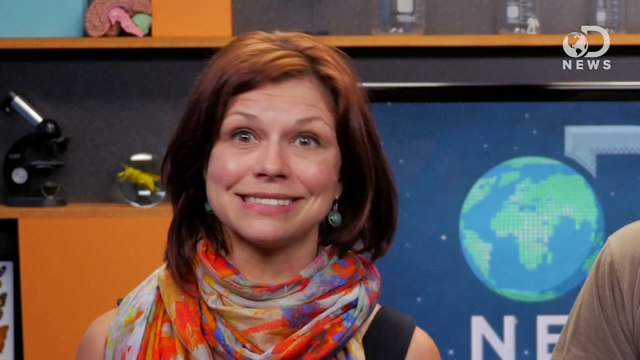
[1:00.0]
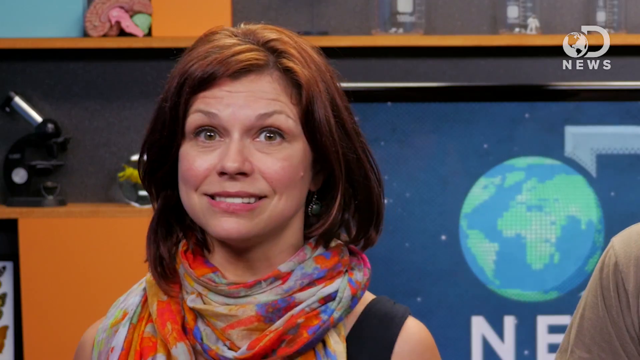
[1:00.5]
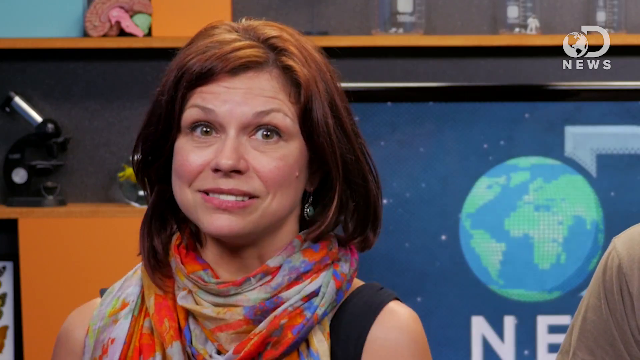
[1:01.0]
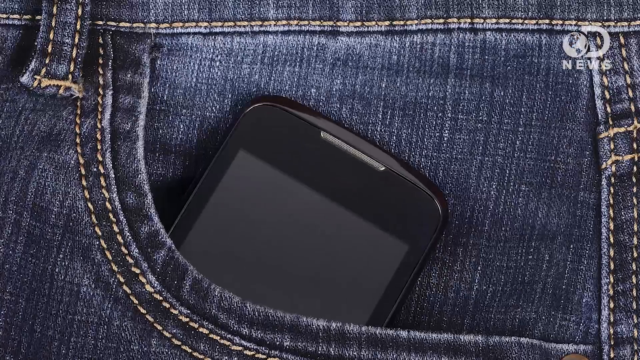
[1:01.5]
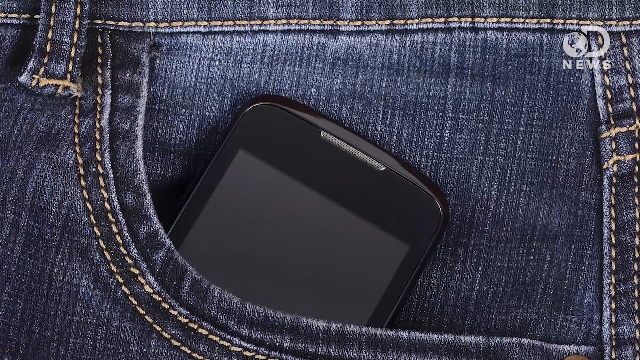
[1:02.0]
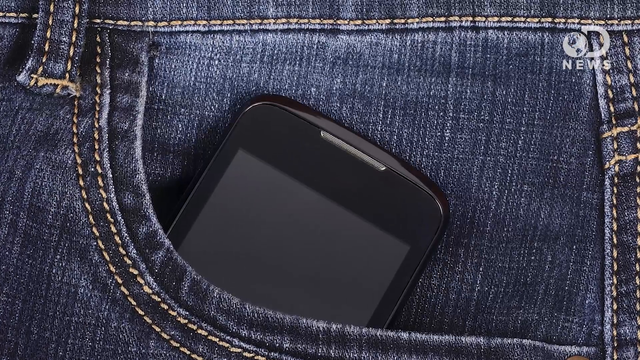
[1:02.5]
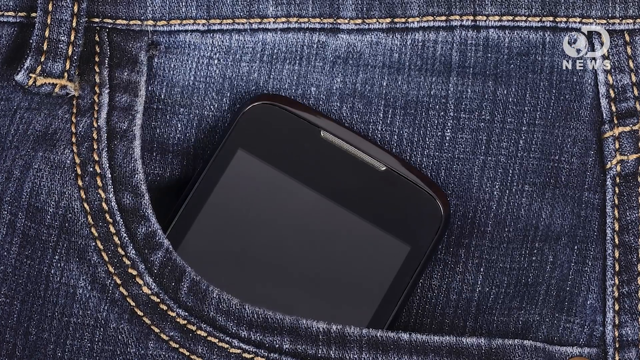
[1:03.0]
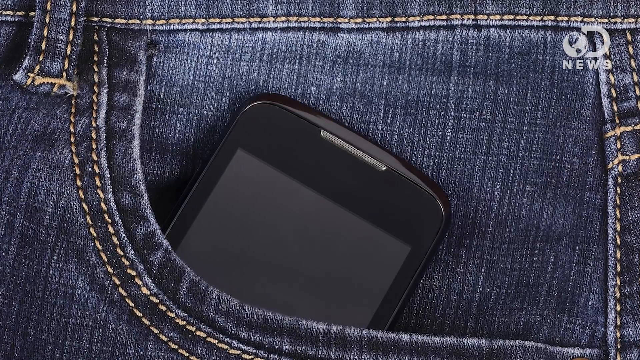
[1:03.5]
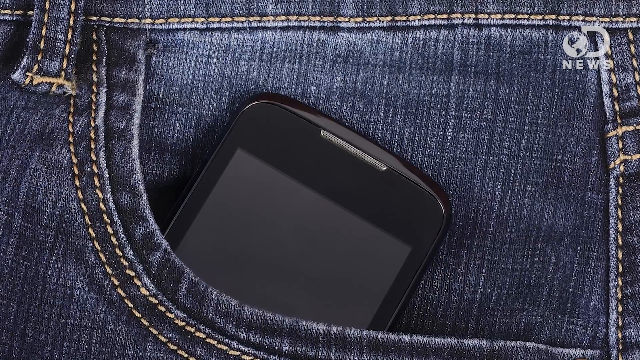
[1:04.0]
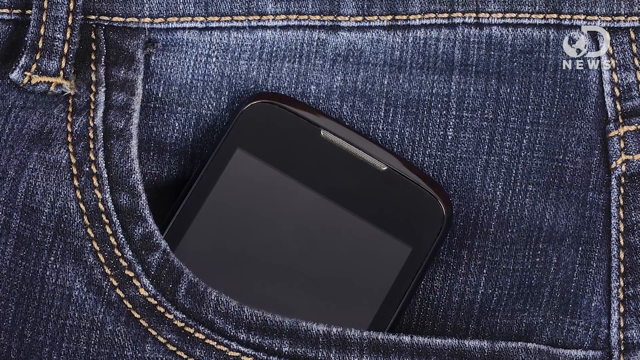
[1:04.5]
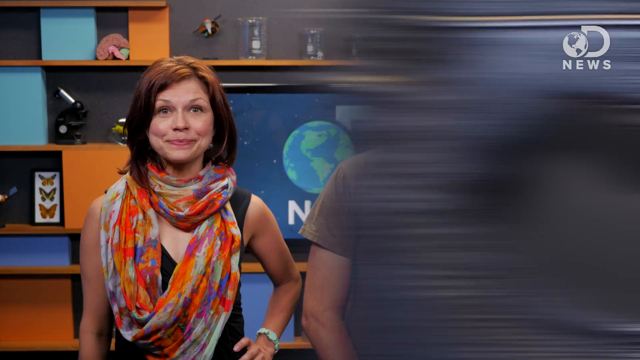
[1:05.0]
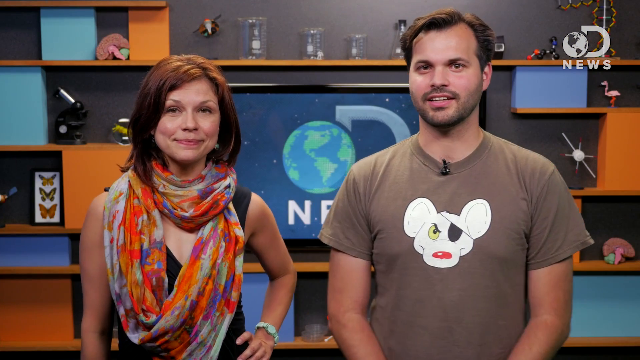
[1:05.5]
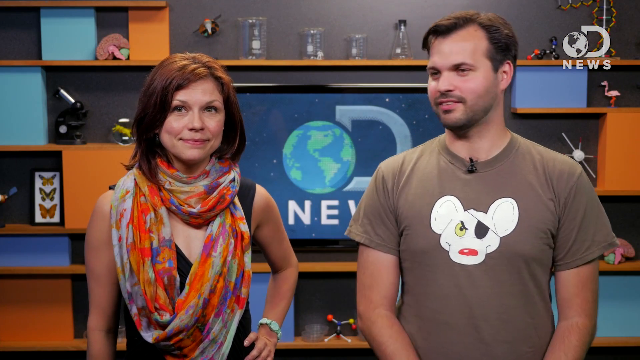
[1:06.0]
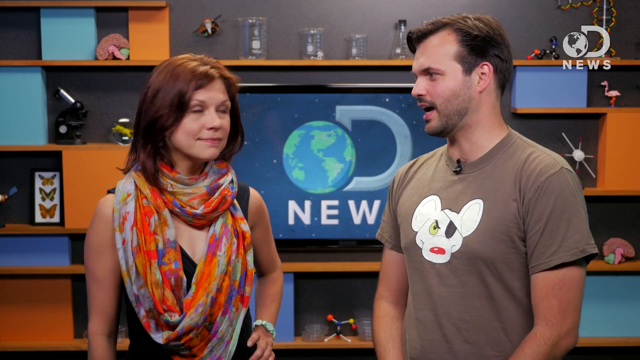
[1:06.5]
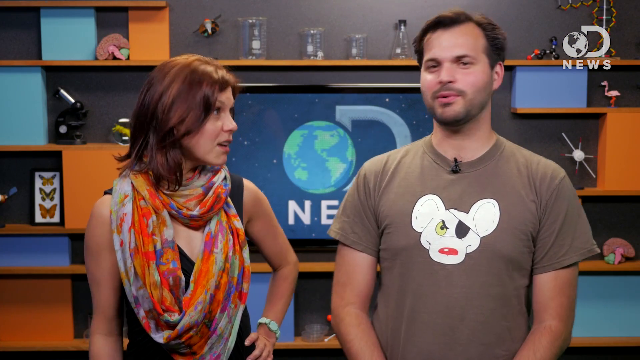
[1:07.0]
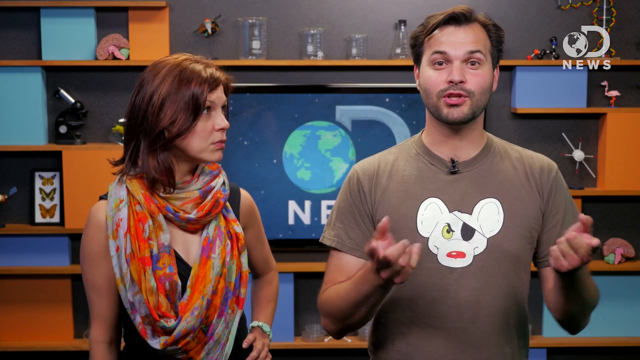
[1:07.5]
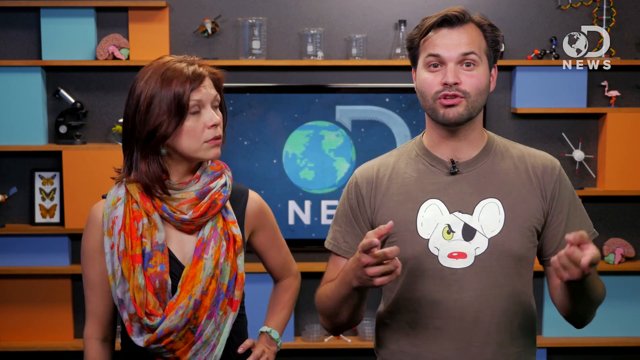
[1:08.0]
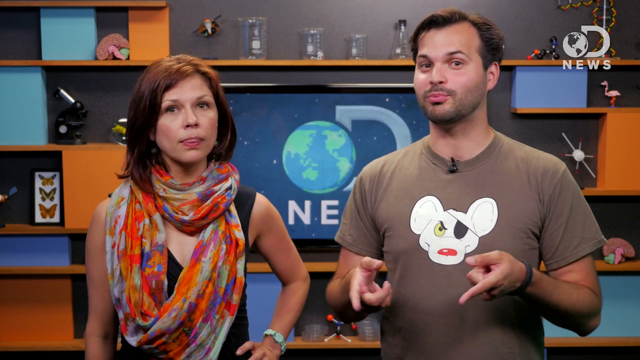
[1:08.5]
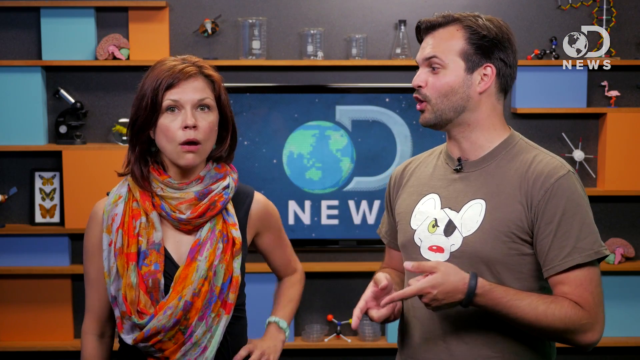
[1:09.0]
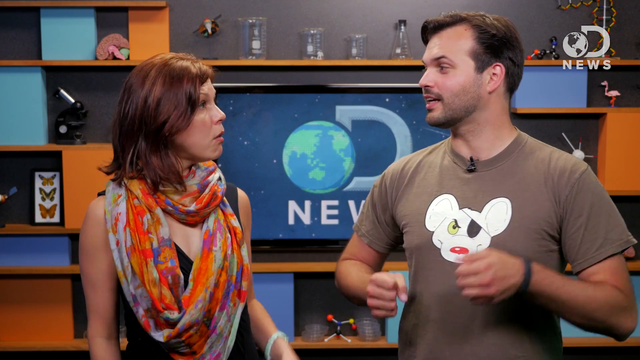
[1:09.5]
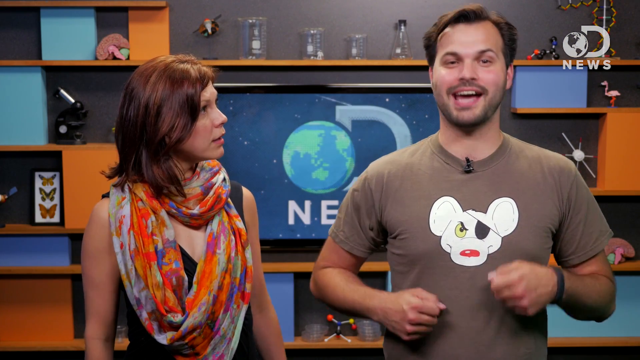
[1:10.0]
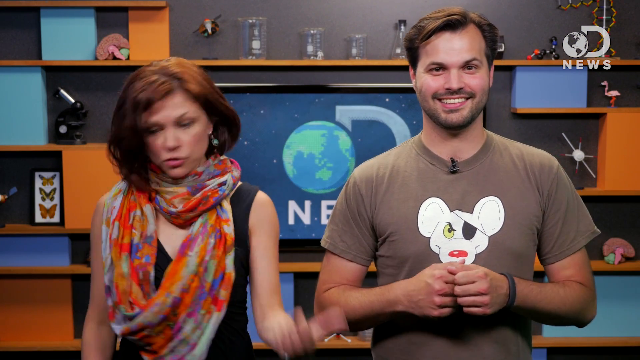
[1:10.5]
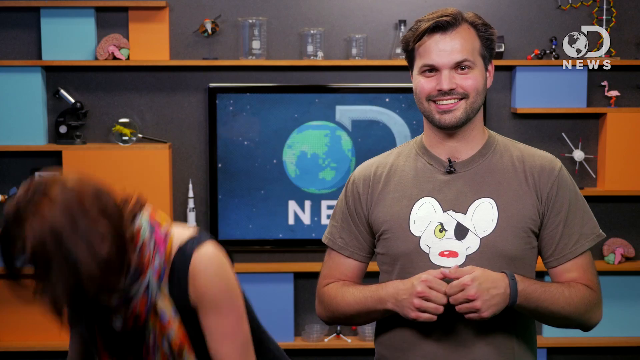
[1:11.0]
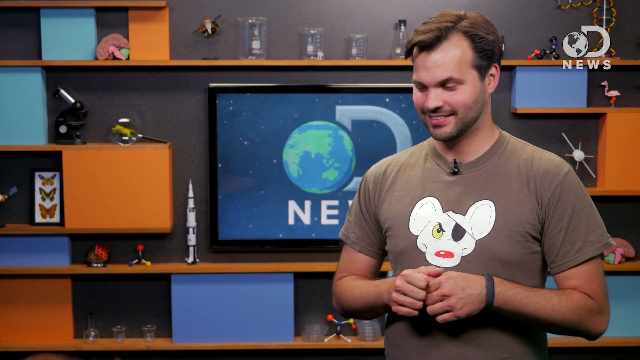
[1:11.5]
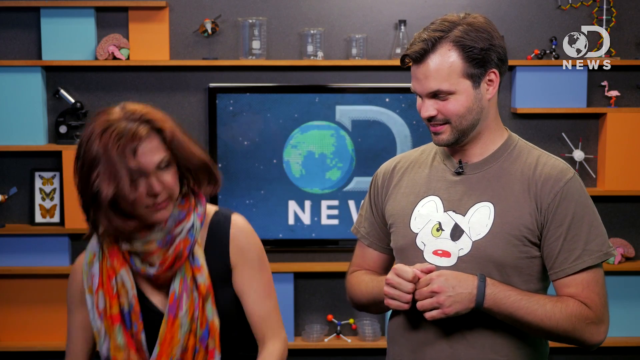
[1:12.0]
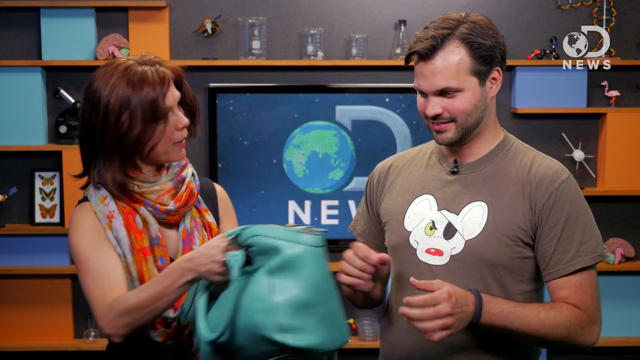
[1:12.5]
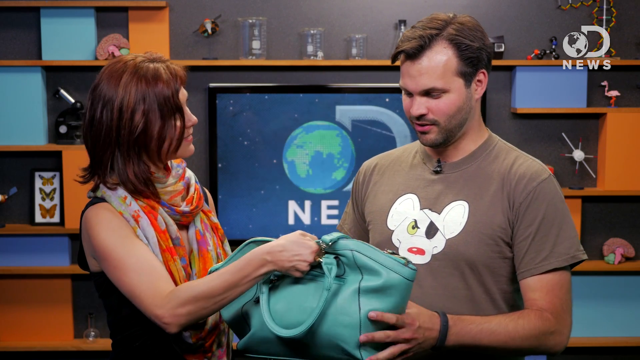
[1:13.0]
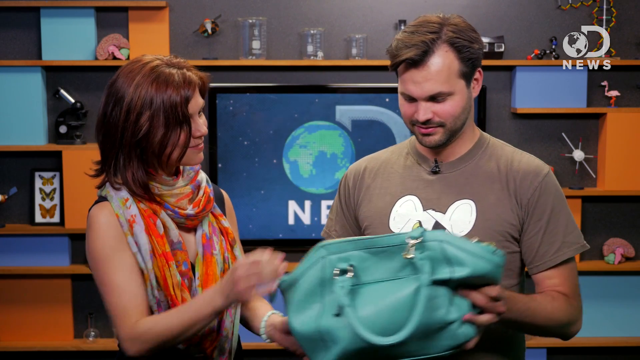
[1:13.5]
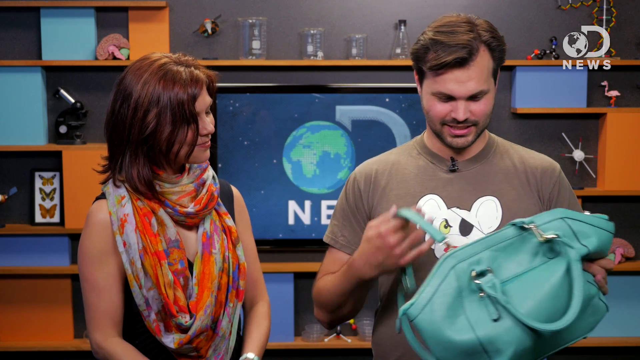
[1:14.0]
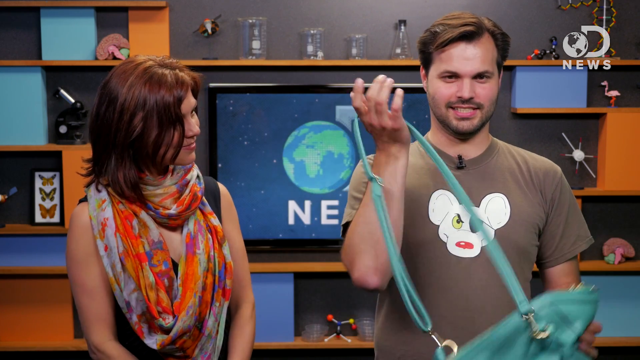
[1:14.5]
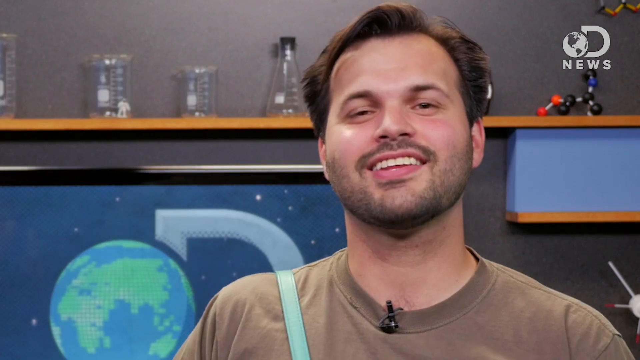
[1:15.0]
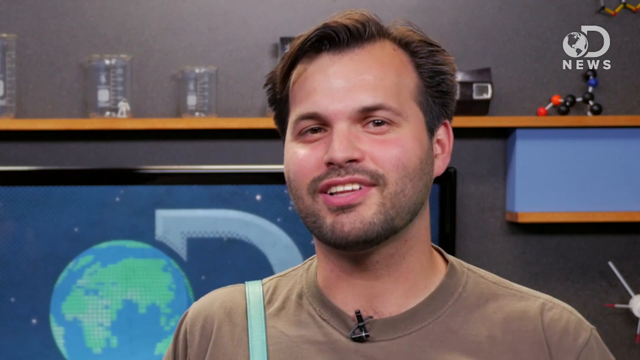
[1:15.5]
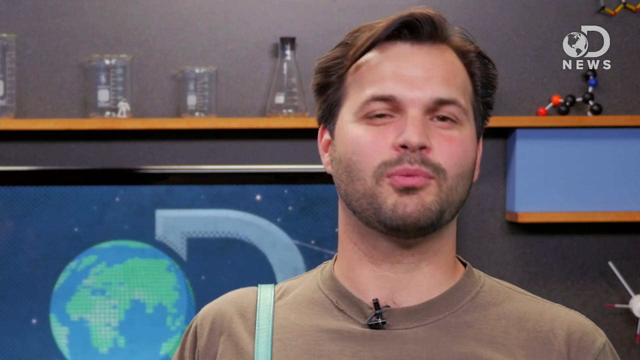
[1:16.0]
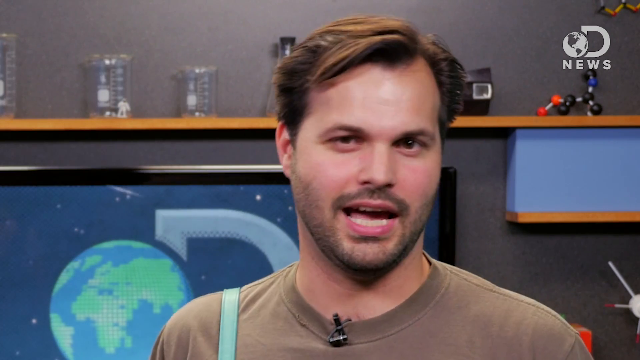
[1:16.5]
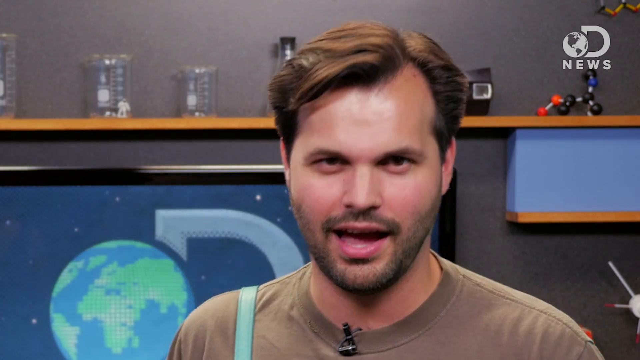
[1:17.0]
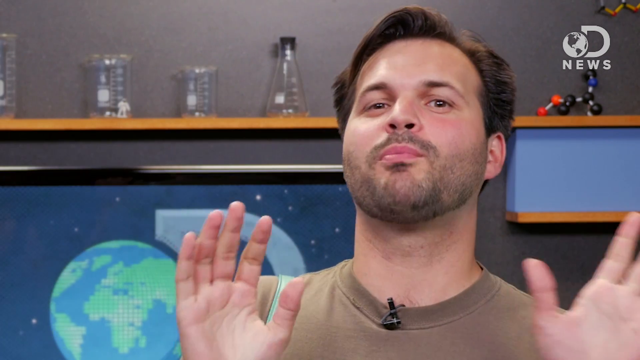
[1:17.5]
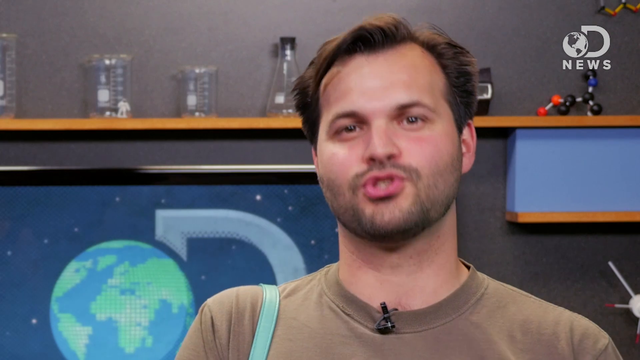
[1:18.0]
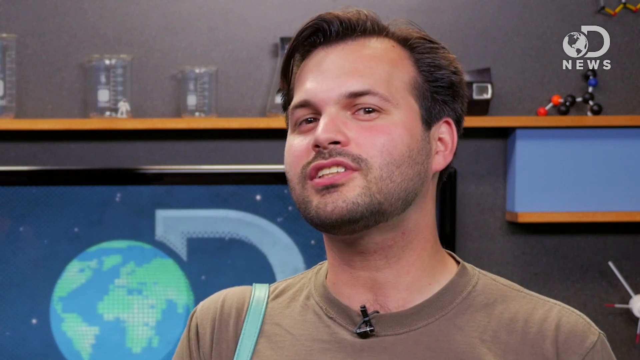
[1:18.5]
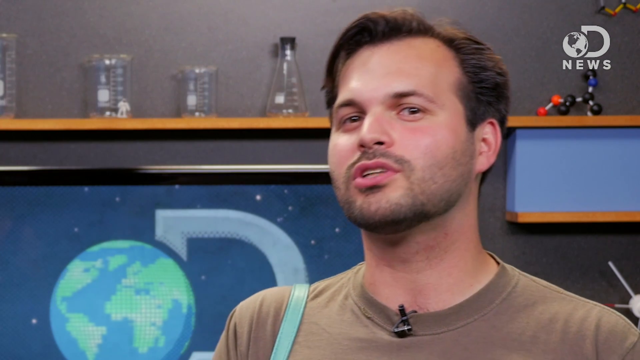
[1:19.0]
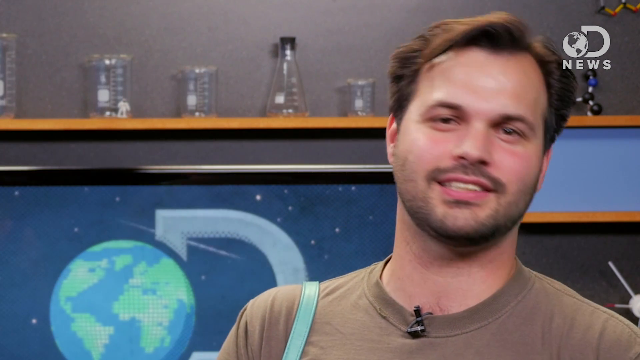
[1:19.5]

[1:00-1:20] A close-up shows the lady in the tie-dye-looking scarf with reds, whites and blues. The DNews logo with the Earth and stars is on the monitor in the background. Flasks are up on a shelf; the shelves are kind of an orange color, with a little blue up there, and there is what may be a model of a brain. The lady smiles, and then there is a close-up of the cell phone and then blue jeans. The camera shows the two of them: the man's grayish shirt with the white mouse with an eye patch and red nose, and her tie-dye-looking scarf. D News is on the monitor in the background, science flasks are up on the shelf, along with what looks like a model of a brain, and the microscope is visible. They talk and look around. She bends over and picks up something that looks like a purse, a teal blue purse. He wears it, talking and looking at the camera.